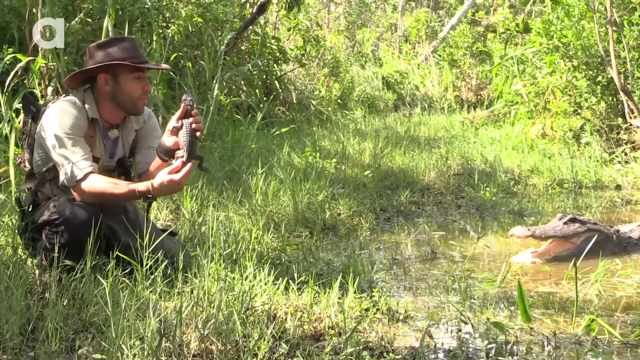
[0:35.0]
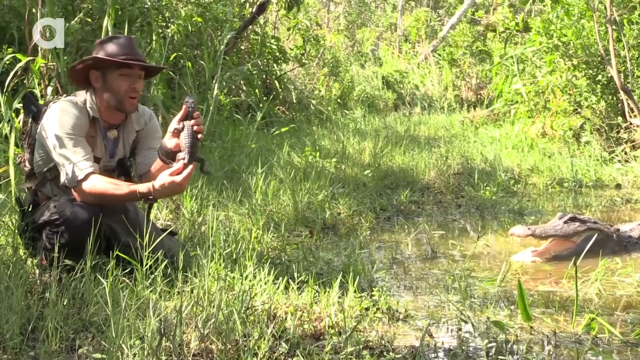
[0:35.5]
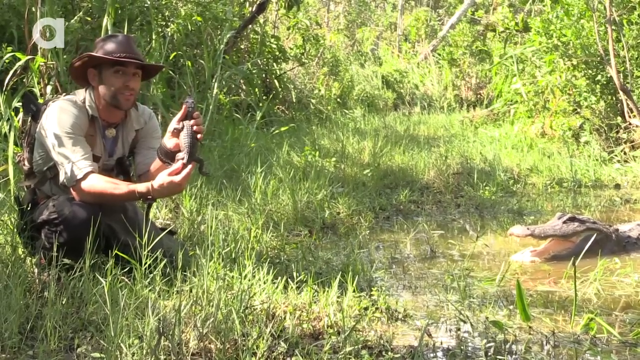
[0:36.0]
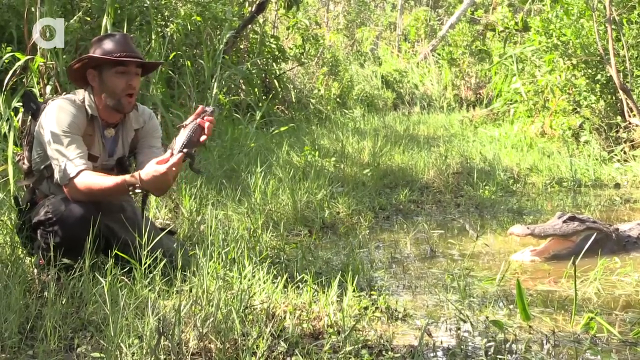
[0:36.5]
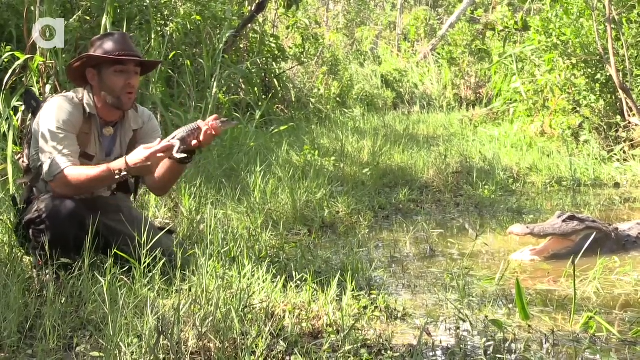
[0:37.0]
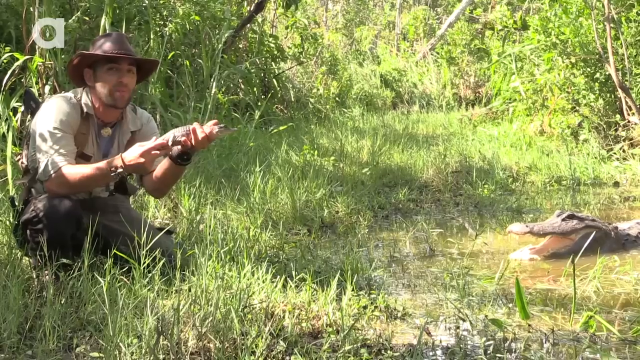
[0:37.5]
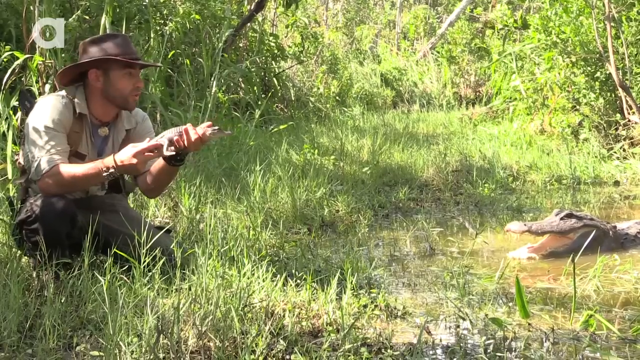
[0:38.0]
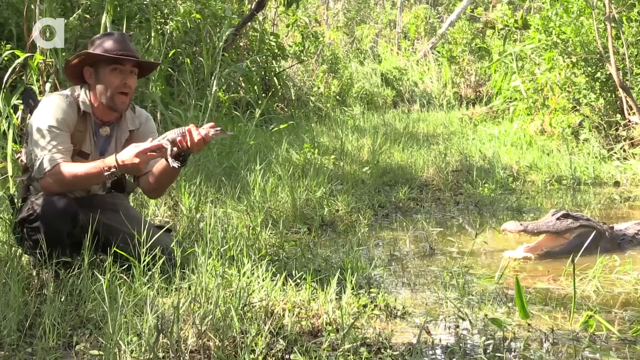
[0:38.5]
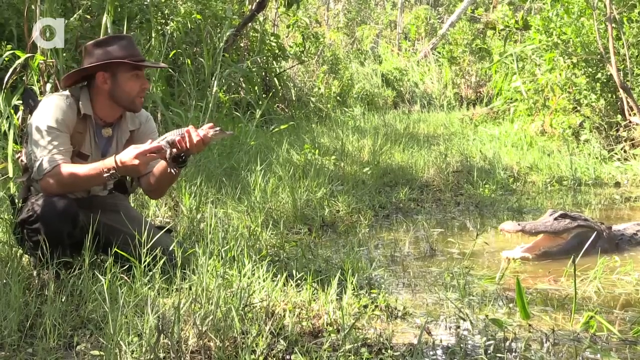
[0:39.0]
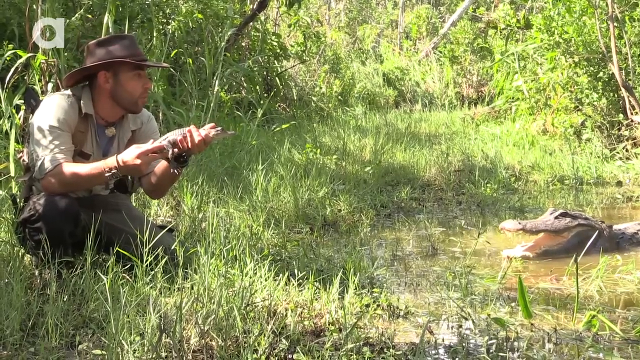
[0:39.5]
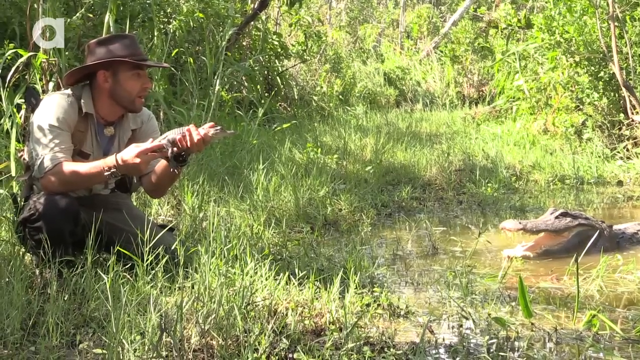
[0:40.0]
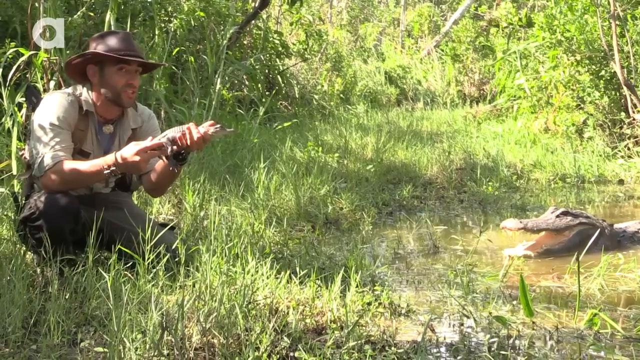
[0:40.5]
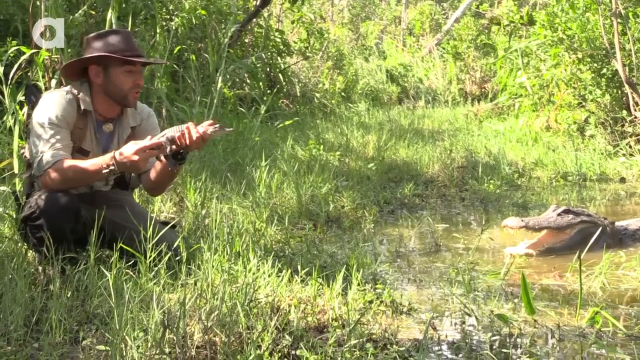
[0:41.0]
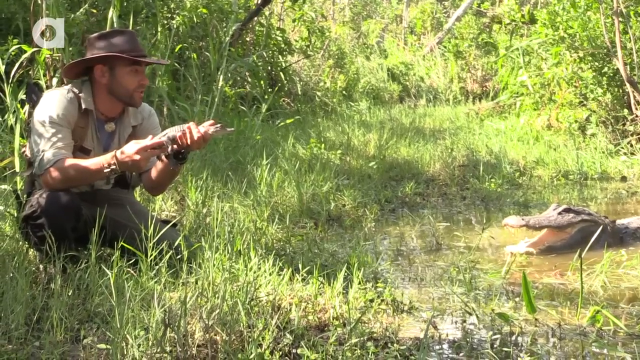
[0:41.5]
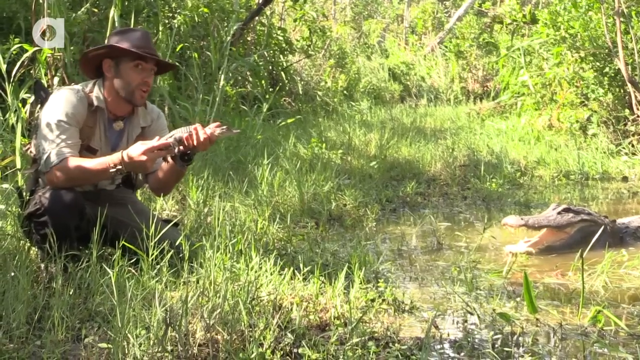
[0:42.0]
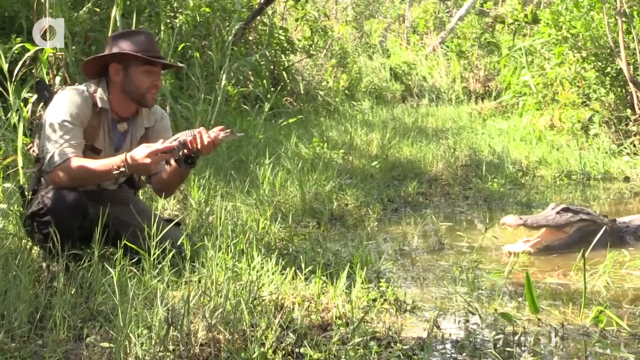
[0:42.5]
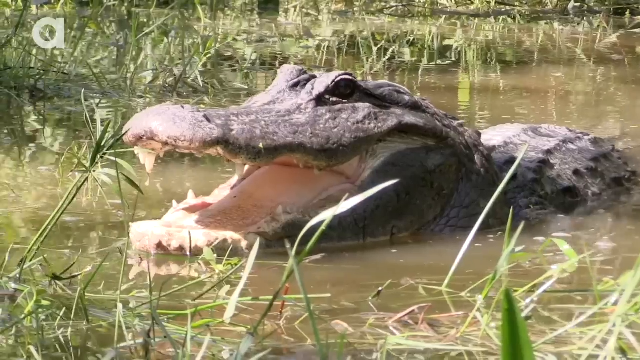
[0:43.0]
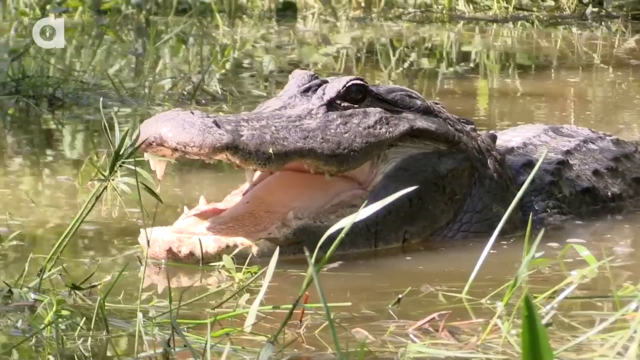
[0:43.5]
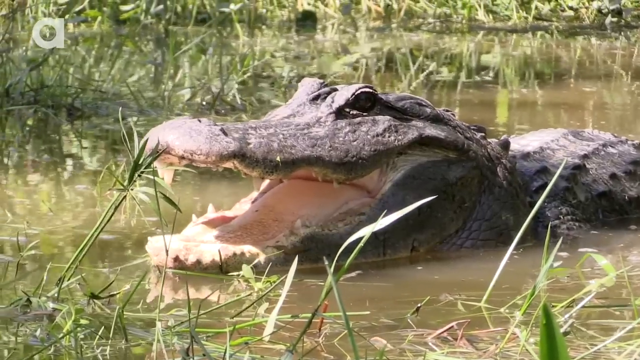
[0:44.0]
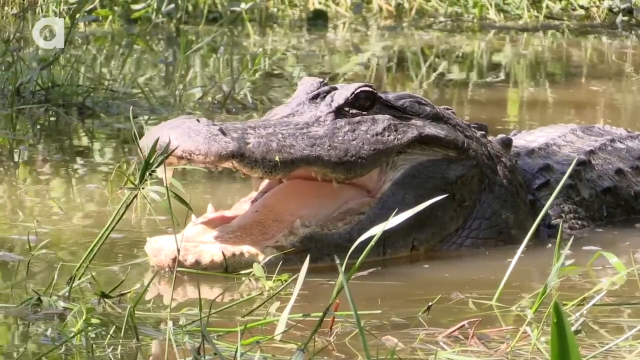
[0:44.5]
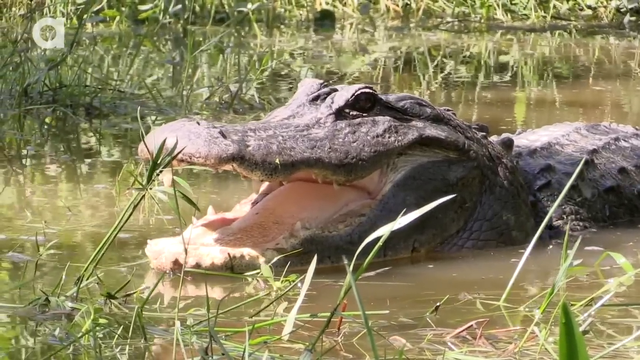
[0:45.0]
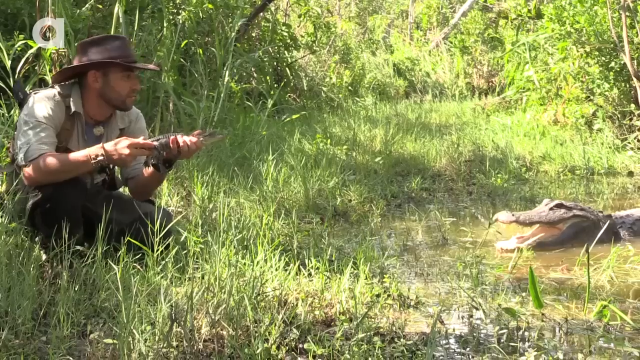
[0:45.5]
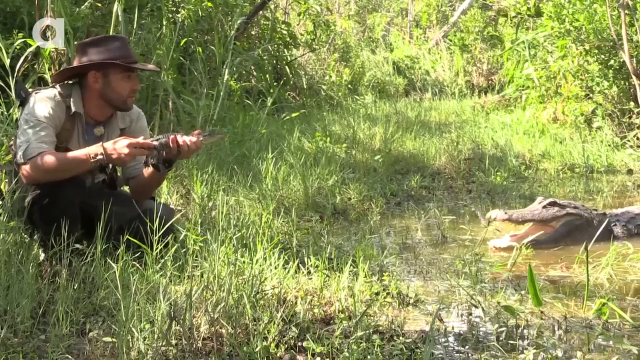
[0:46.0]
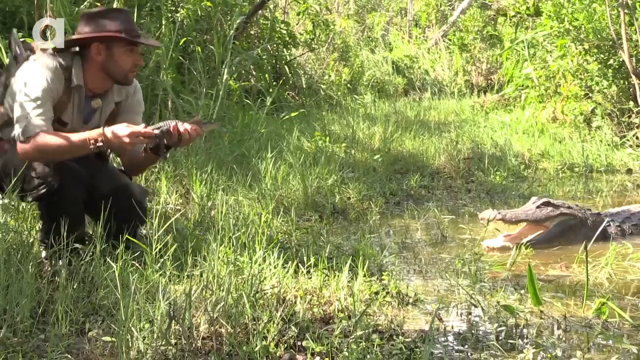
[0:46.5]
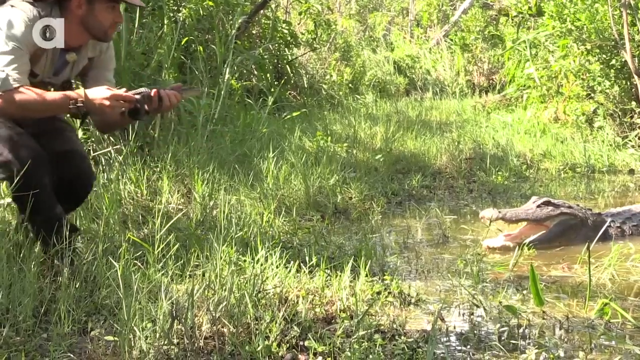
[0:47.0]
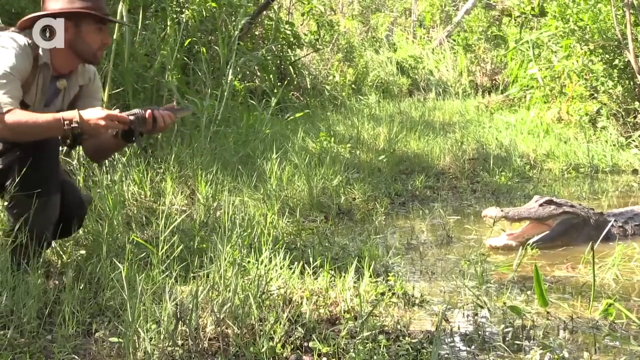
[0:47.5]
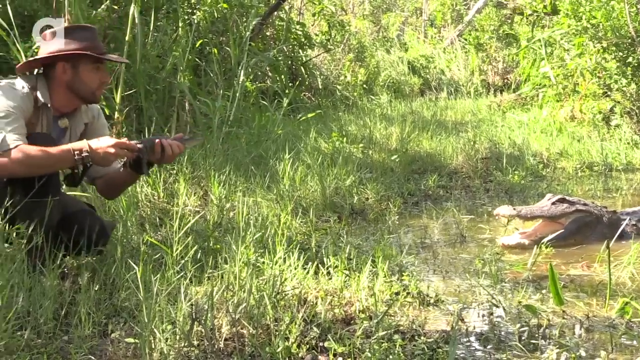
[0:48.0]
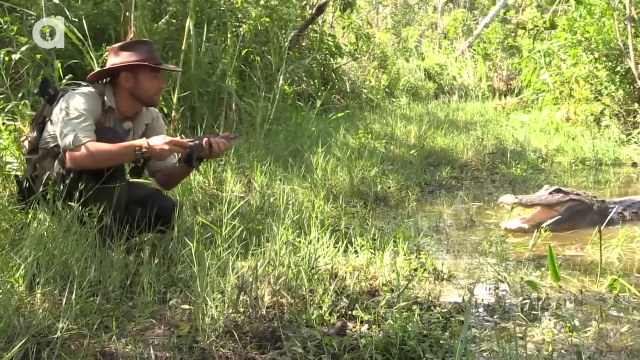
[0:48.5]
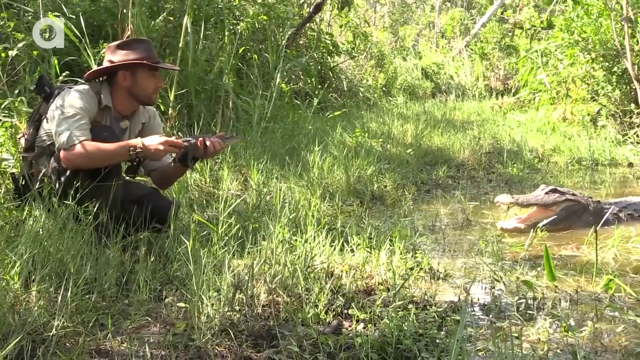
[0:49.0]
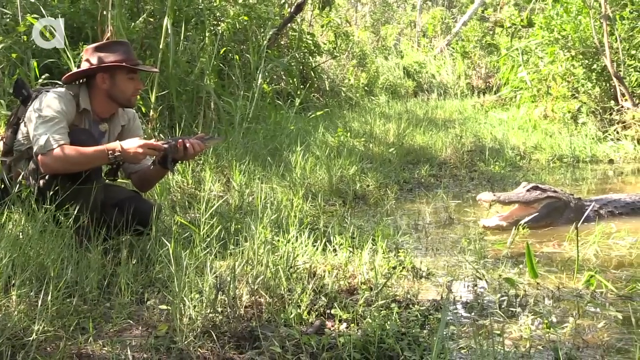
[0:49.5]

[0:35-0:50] In a zoomed-out view, the man holds the baby alligator in his left hand, propping its head up, while his right hand holds the tail area; he shows its back while talking to the camera. He wears a brown hat and bush clothing in colours that would blend in naturally, beige and darker colours, without a camouflage print. He has a necklace on. He is crouched down in the grass at the side of some water. On the right, an alligator has its mouth open. The baby alligator moves a bit as the man shows it. The alligator on the right slowly moves toward the man, and the camera zooms in on her moving toward him; she is apparently the mother. As it becomes clear that the mother alligator is headed toward him, the man stands up and scoots back a little, apparently to stay safe.